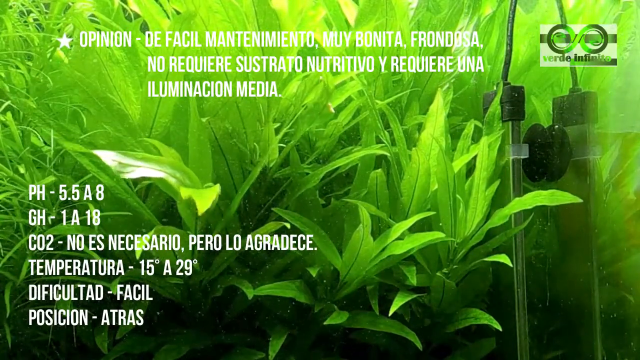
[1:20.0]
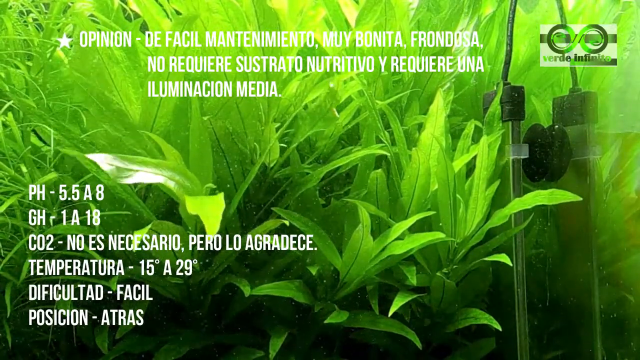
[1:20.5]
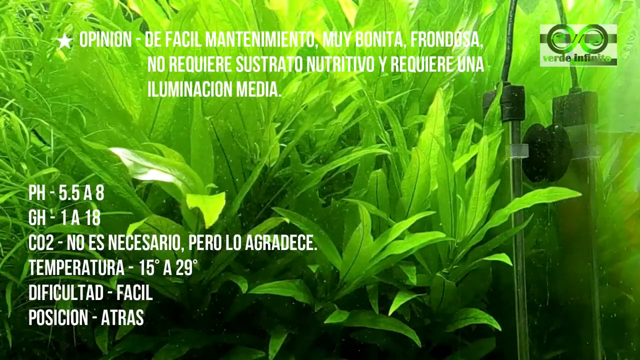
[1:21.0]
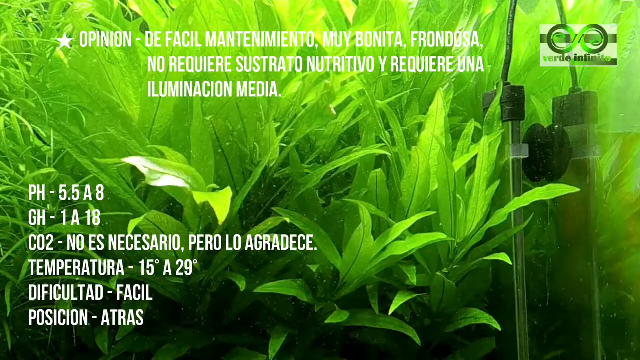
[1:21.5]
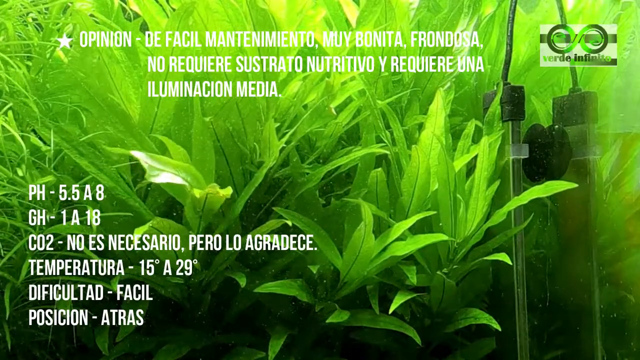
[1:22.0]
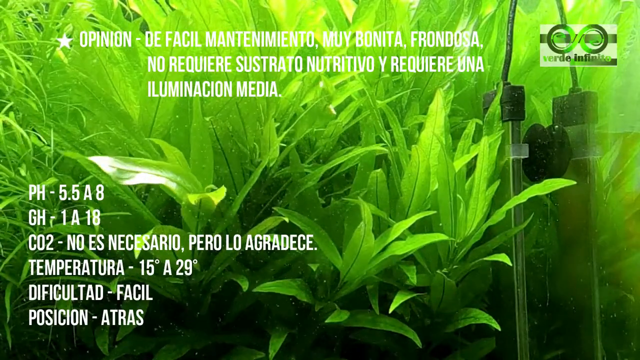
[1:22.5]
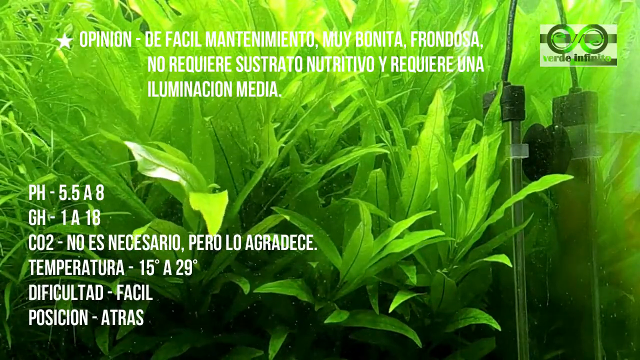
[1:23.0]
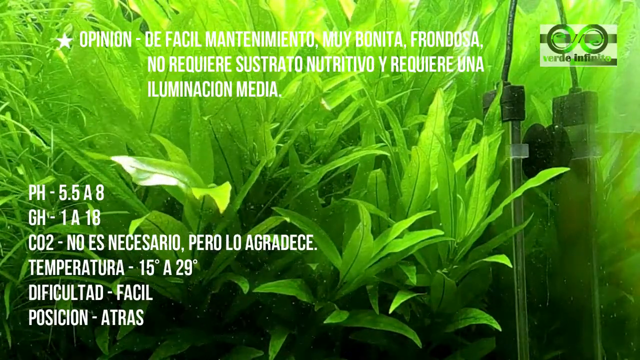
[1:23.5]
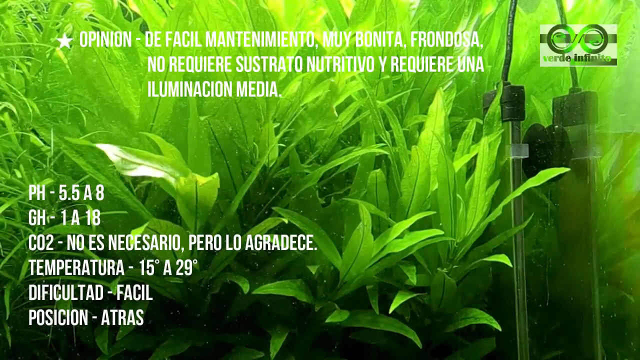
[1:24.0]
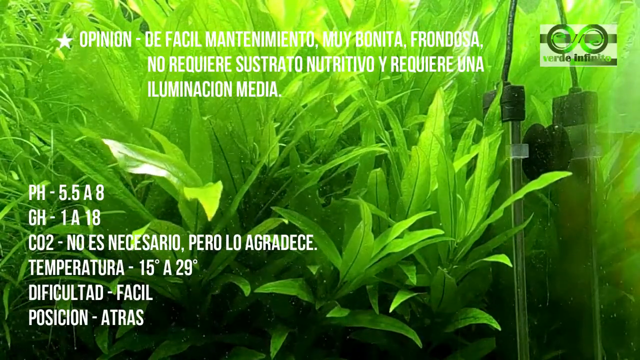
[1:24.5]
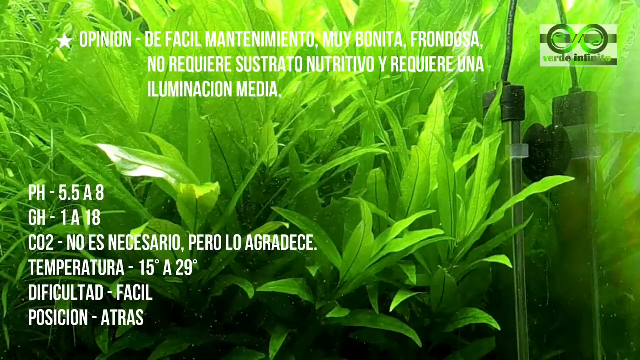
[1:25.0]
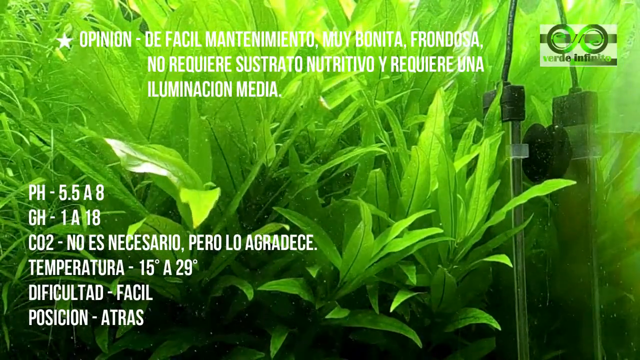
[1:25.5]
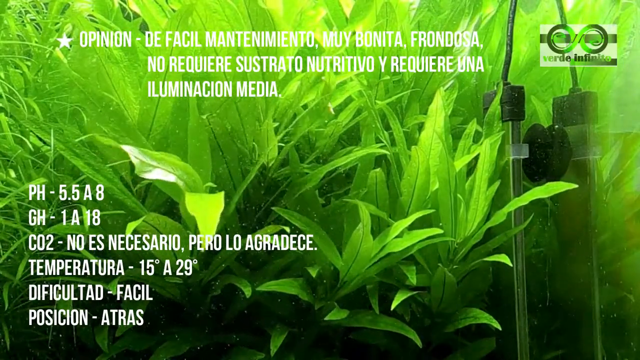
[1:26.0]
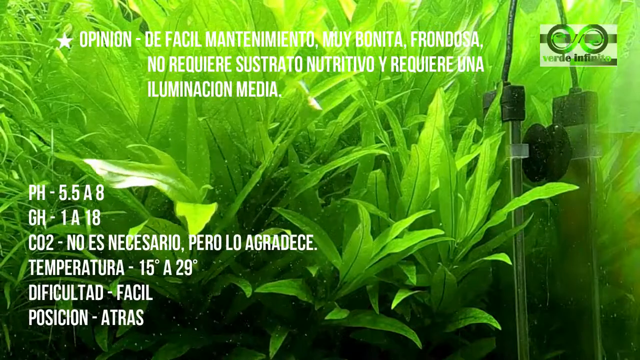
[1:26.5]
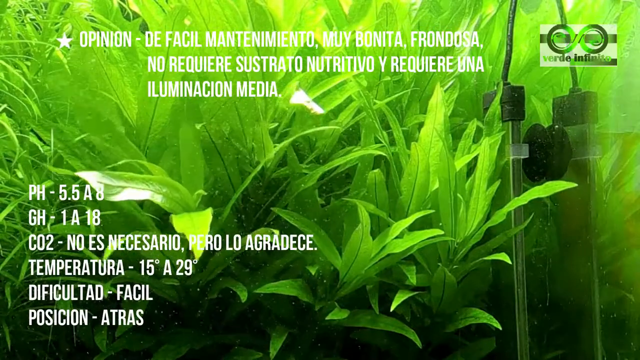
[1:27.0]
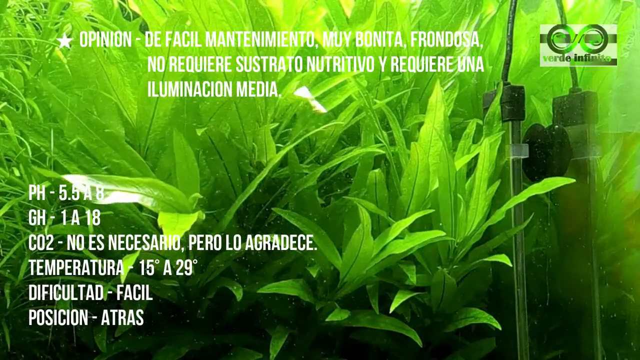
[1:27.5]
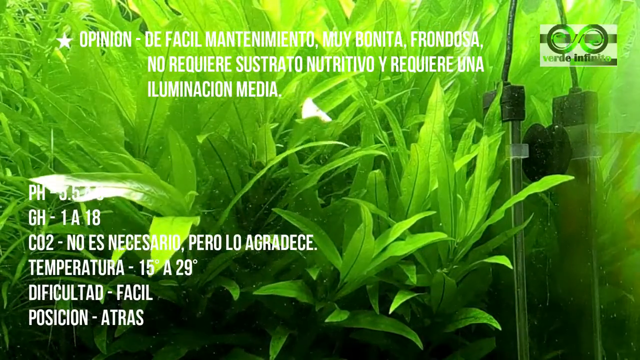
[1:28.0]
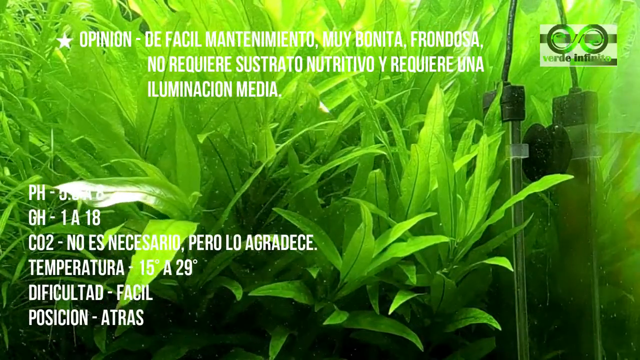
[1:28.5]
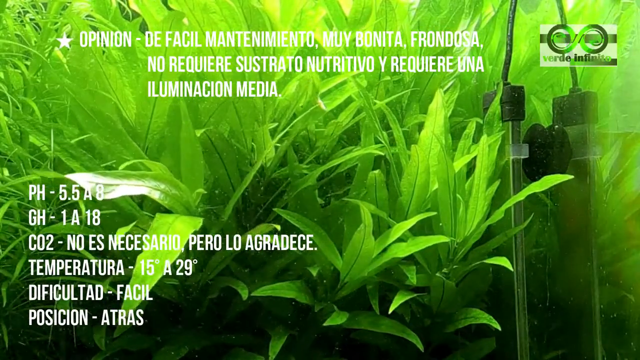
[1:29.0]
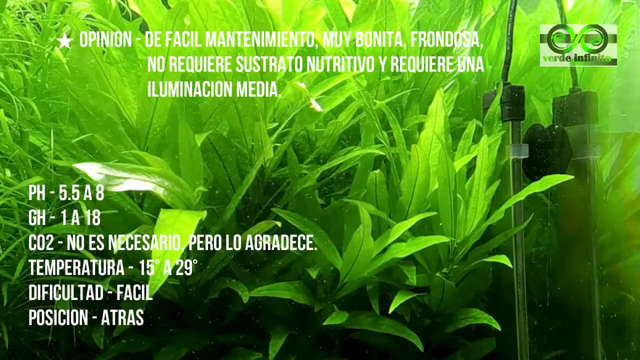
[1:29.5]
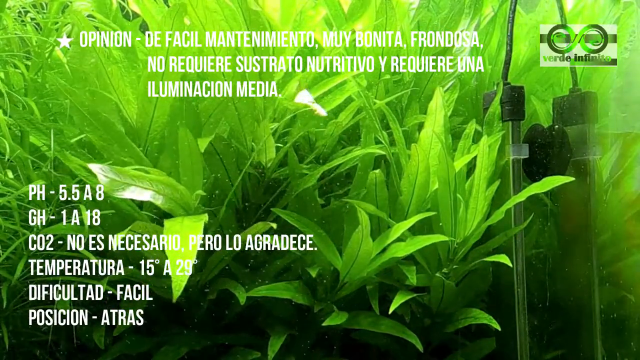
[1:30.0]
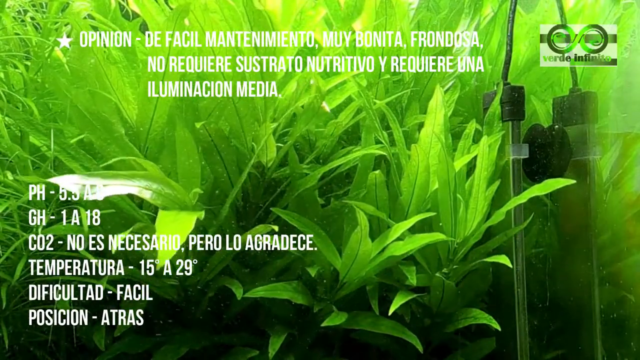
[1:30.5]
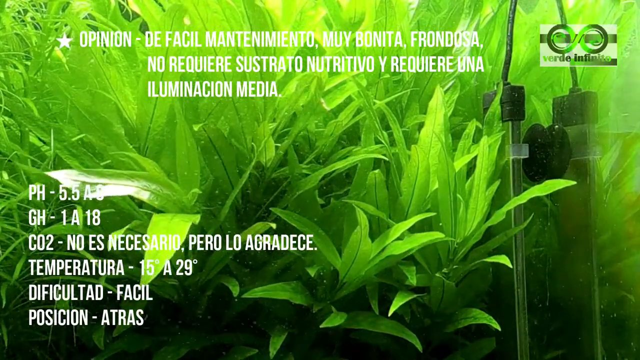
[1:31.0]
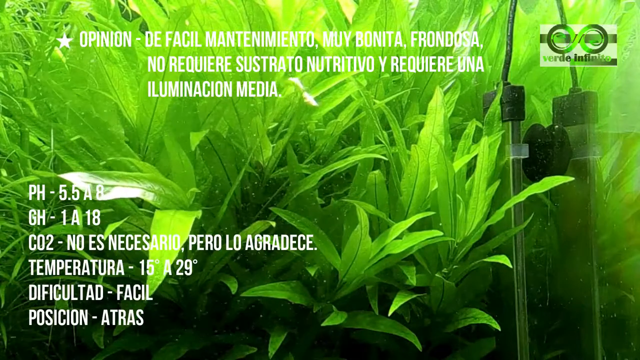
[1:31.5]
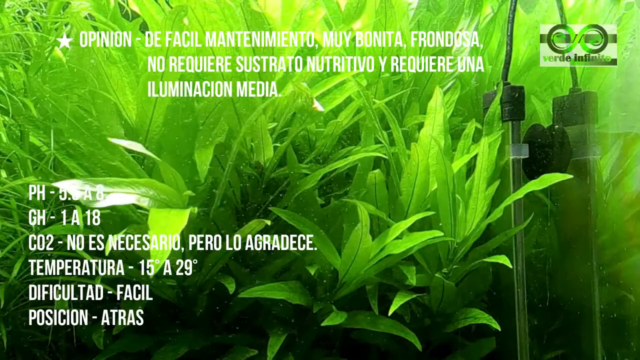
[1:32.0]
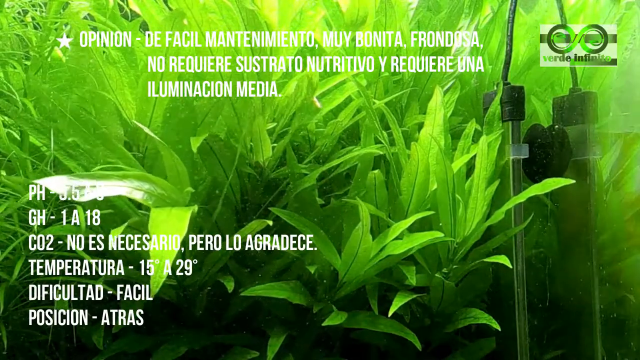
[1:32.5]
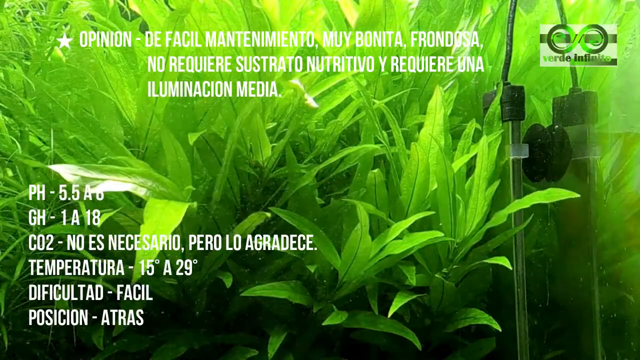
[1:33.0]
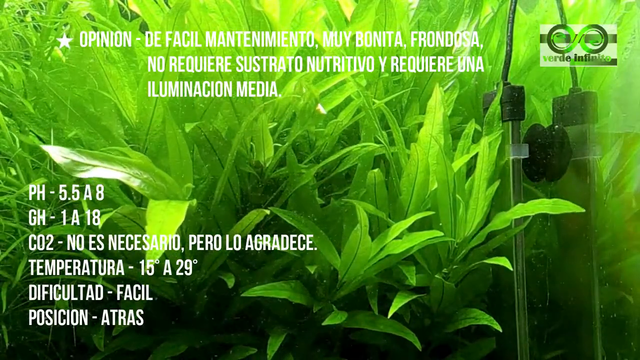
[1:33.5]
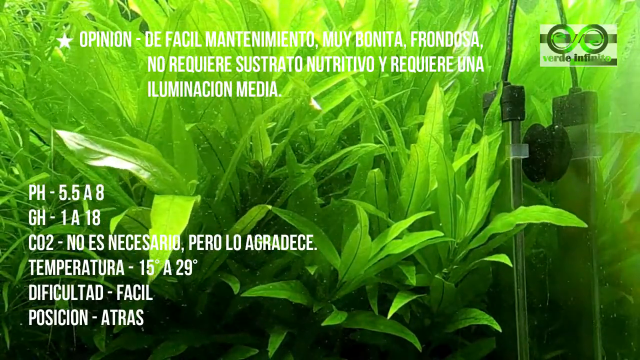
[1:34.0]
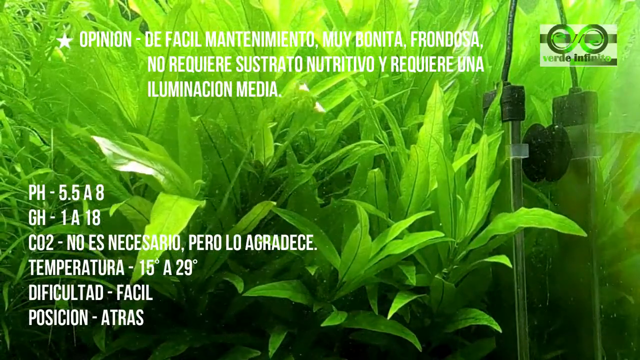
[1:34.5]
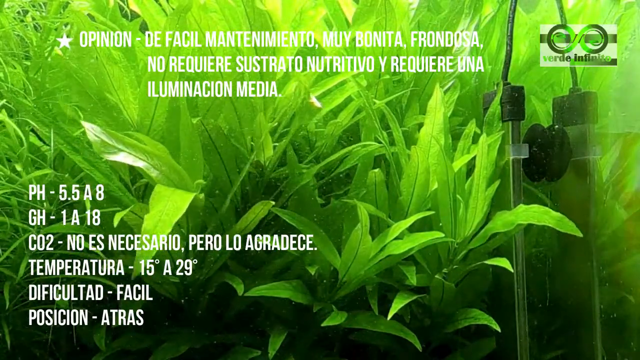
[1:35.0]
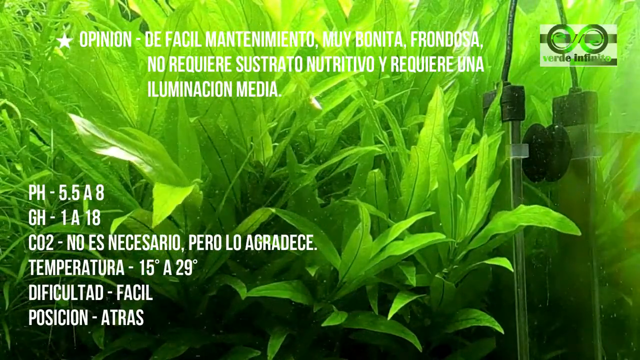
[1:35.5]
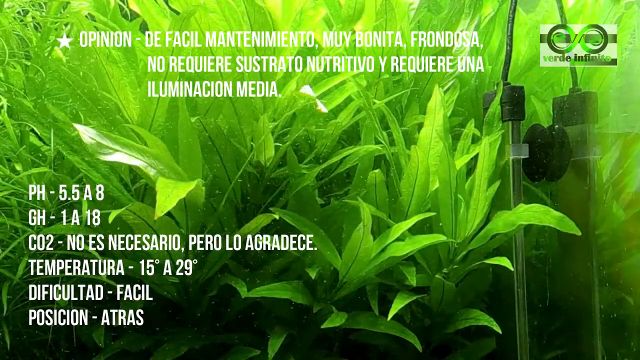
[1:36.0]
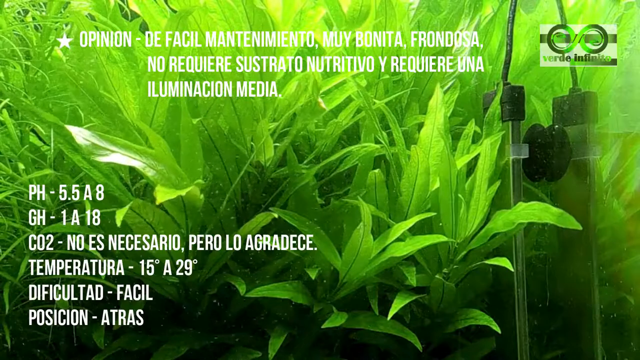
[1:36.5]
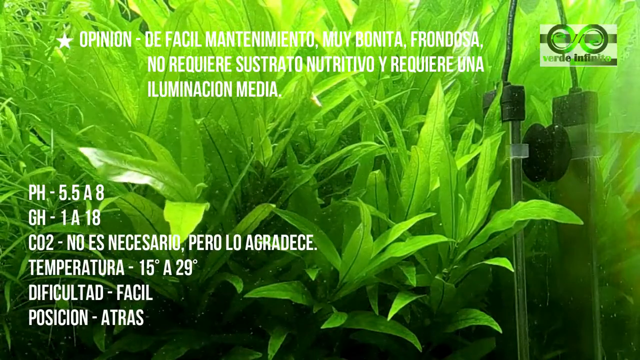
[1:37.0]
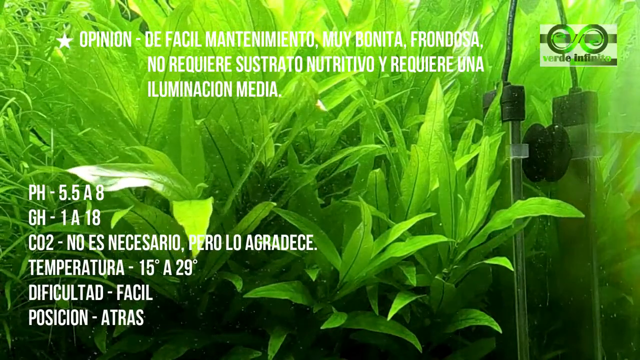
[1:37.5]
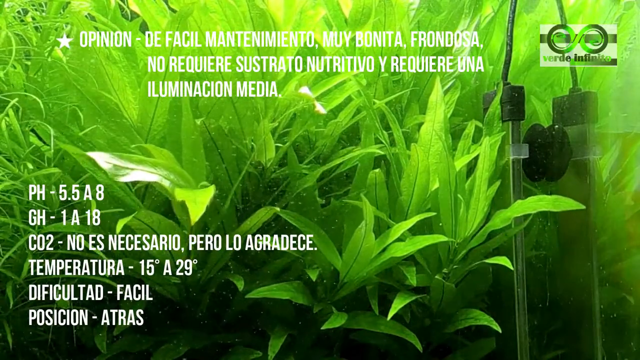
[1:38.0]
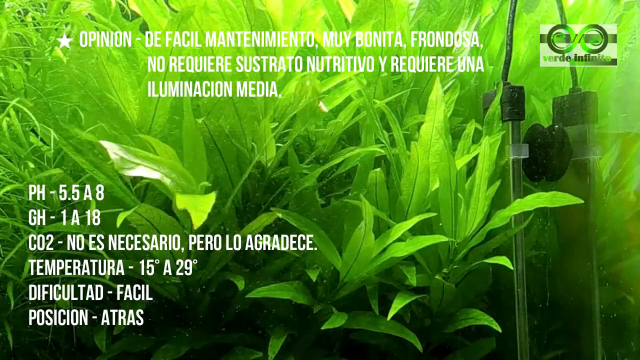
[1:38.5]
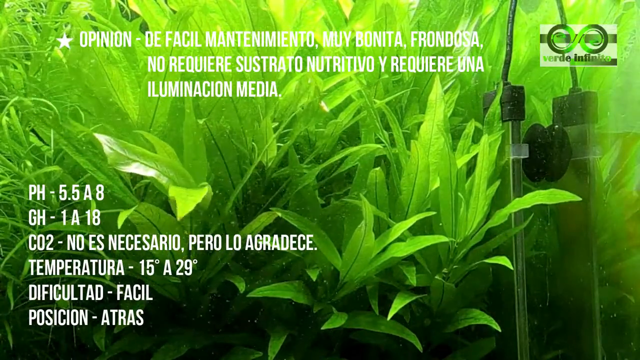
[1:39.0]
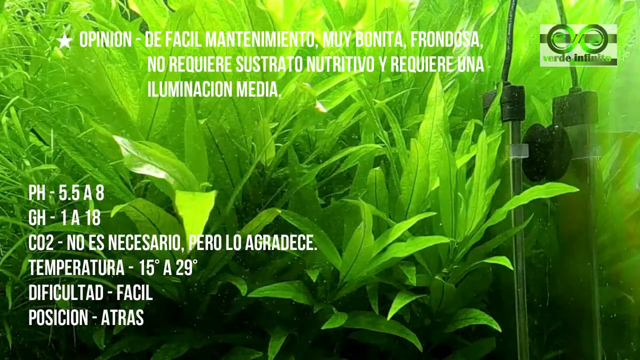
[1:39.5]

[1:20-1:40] The contents of the fish tank remain the main subject, along with information about the tank. The brand logo, Verde Infinitivo, is in the top right. White text at the top, apparently in Spanish, gives an opinion that the tanks are easier to maintain and very beautiful, and white text in the bottom left gives statistics including the pH level, CO2 level, temperature and other things in Spanish. No fish appear in the tank at this point, only plants of several kinds: some have long green leaves that move subtly with the water as little air bubbles pass by, while others on the left-hand side of the screen look more like a sort of water grass, very long and thin, longer and thinner than the other leaves, and also move subtly with the water. The water appears to be moving quickly to the right of the screen, judging by the direction of the air bubbles.